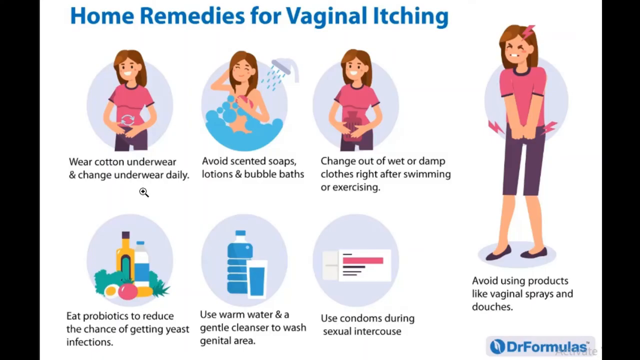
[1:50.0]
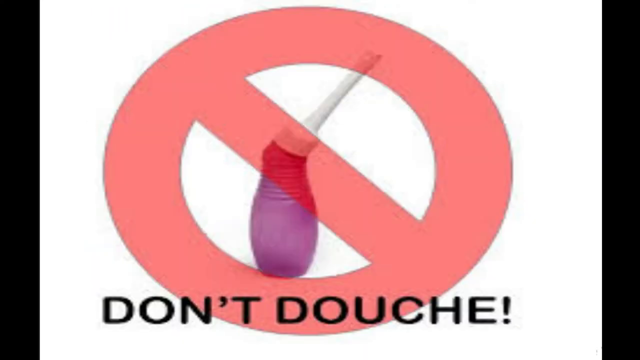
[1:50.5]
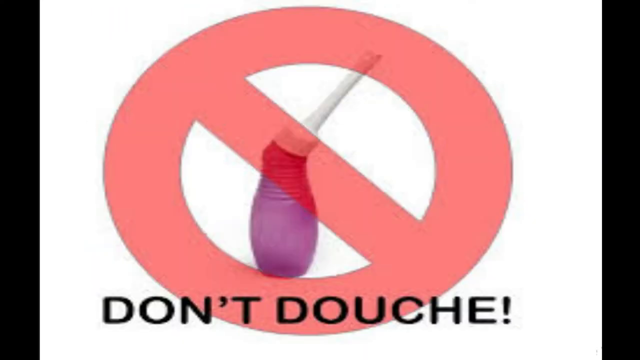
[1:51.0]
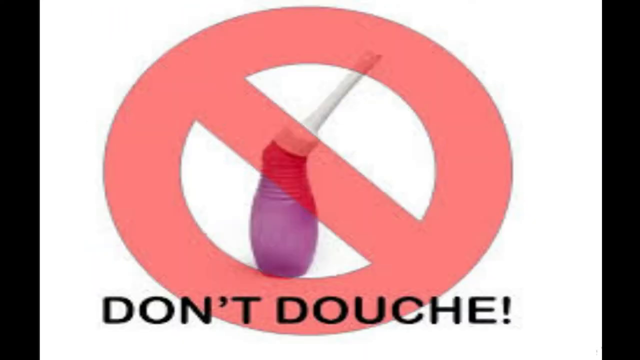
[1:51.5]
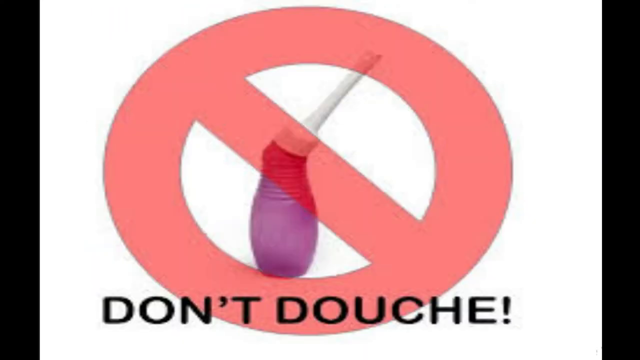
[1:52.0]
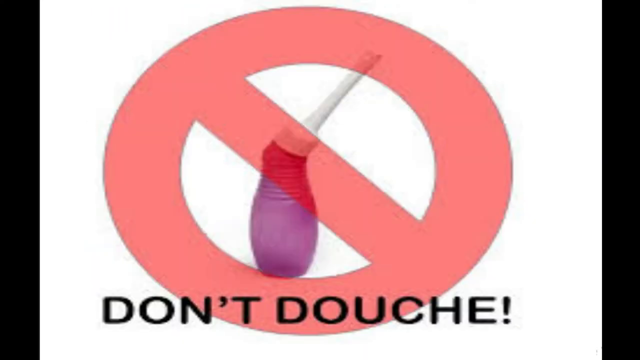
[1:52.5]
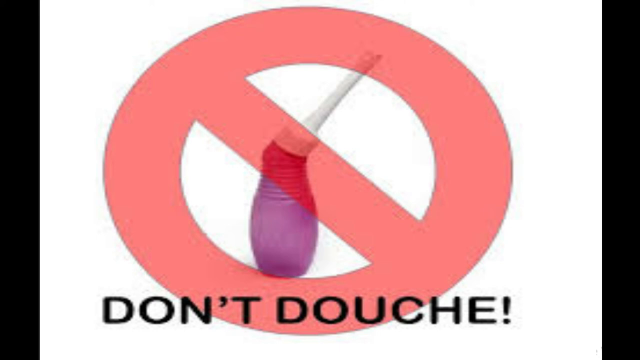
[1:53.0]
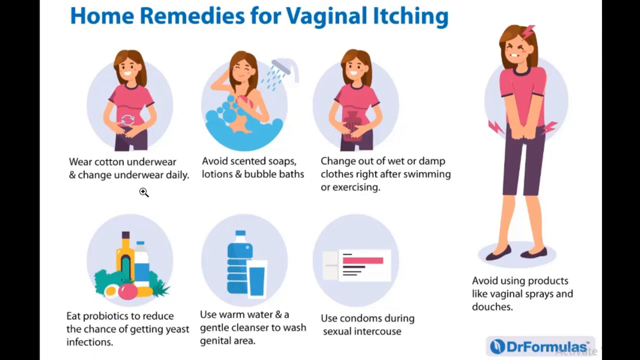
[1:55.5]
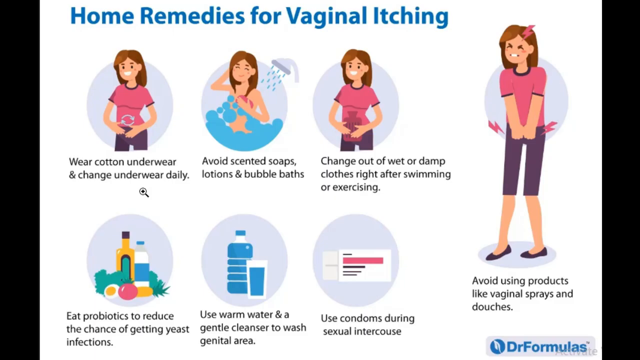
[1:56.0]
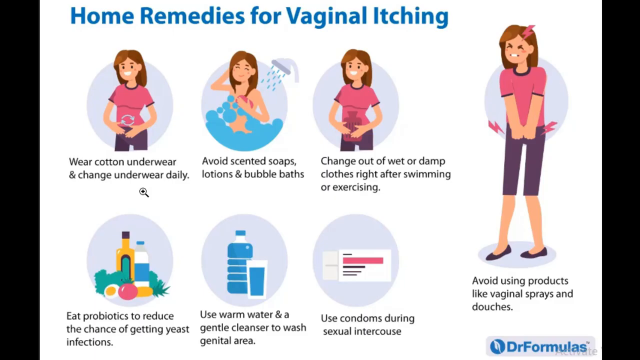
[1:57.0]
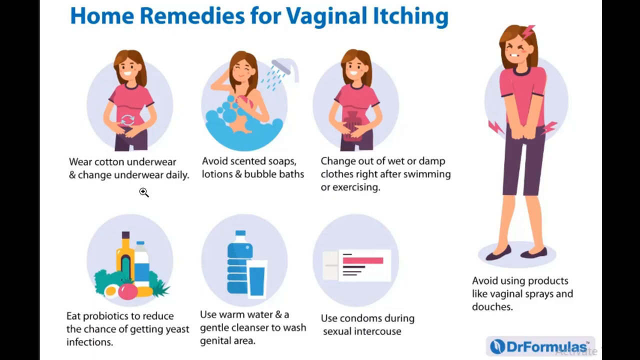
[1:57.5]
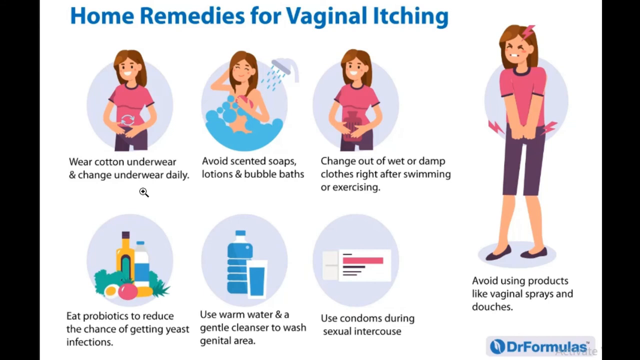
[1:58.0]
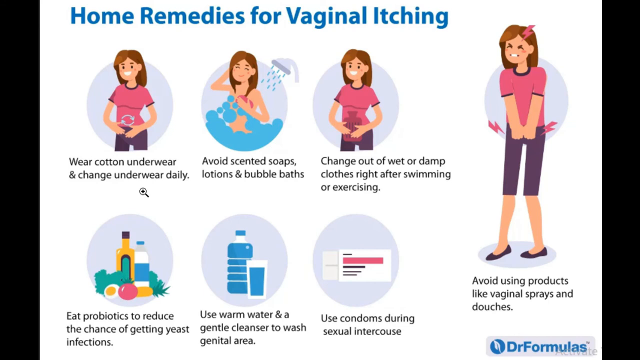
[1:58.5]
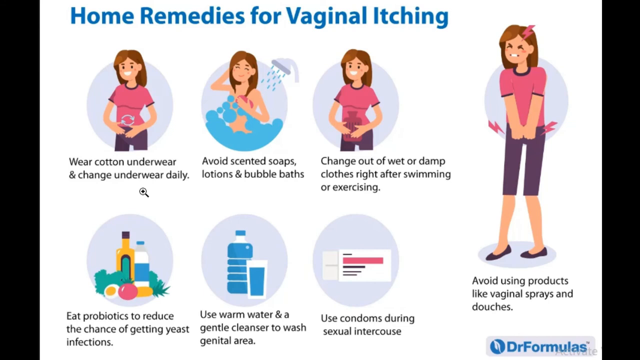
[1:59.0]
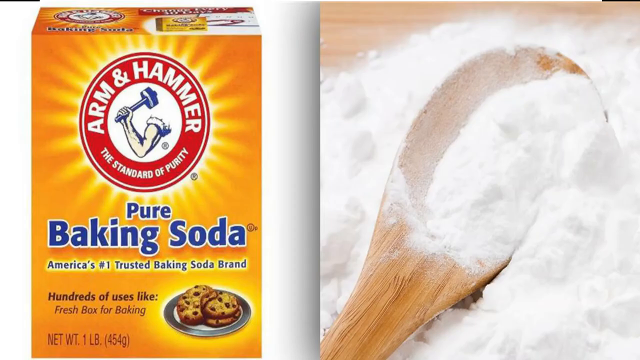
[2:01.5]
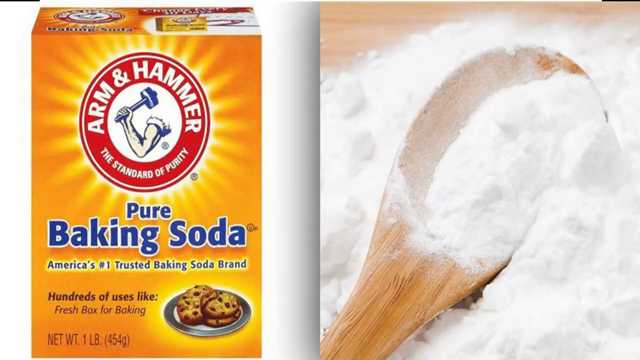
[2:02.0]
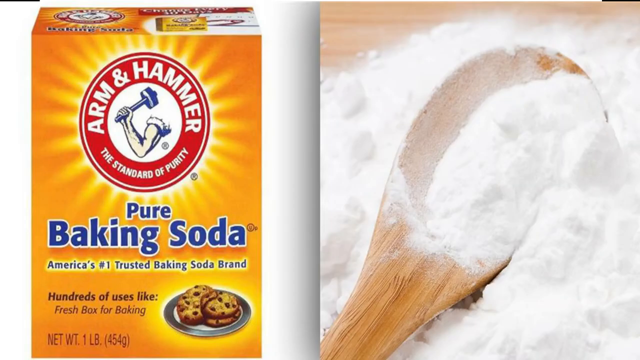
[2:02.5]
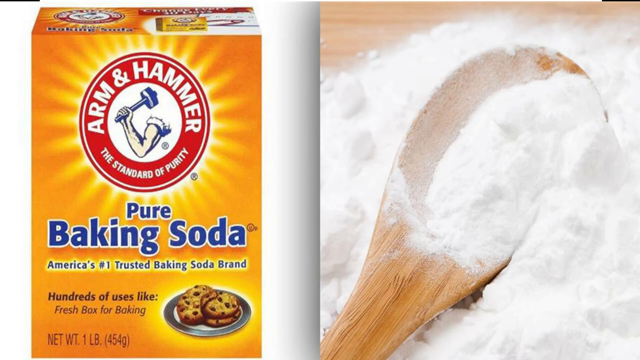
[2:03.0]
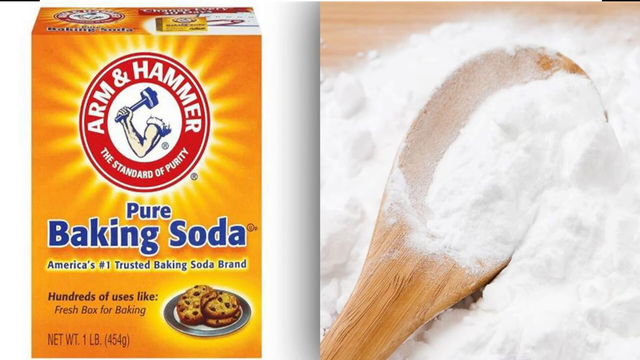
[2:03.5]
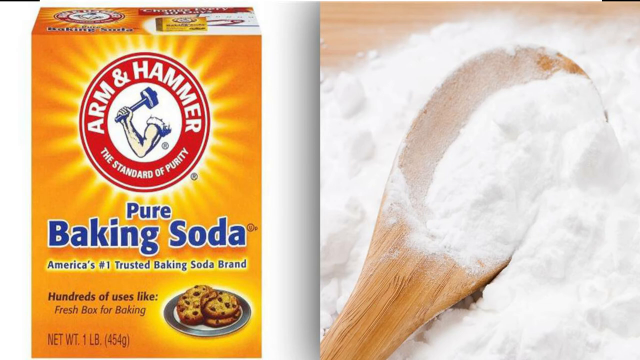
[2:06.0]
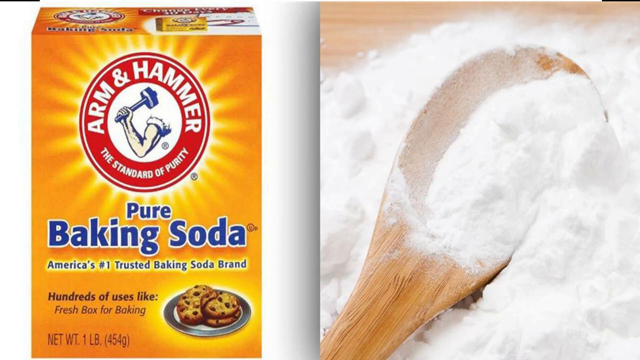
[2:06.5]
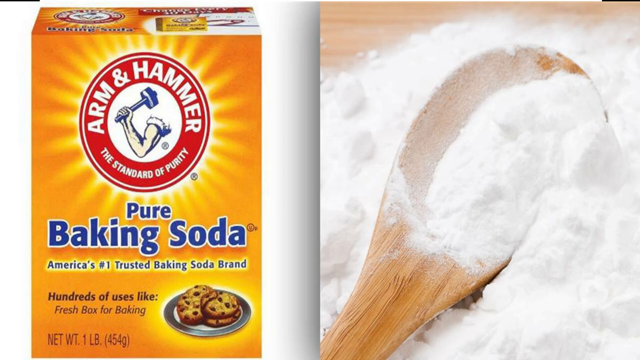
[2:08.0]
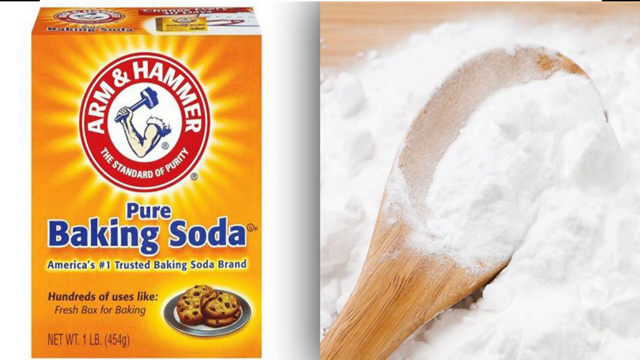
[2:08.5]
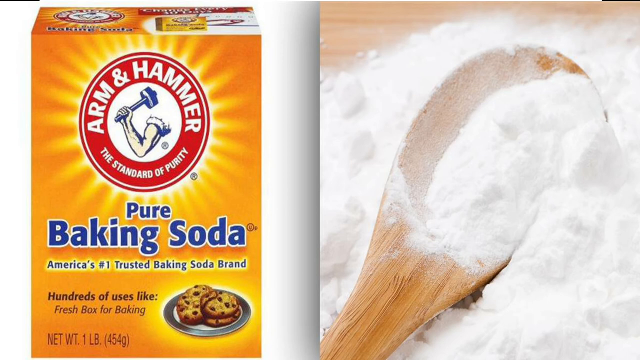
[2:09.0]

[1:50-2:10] A red warning symbol appears, a traditional red outlined circle with a line through the middle, with dark black text underneath that says "don't douche". Against a white background is a picture of a douche with a purple bottom portion and a large white nozzle. The video then goes back to the blue text that reads "home remedies for vaginal itching", with multiple images of a girl who appears to be in pain, shown by pink lightning bolt strikes. She stands with her legs spread a little, wearing purple pants and a pink blouse, holding her arms directly in front of her in kind of a pain posture, with dark hair and anguish on her face.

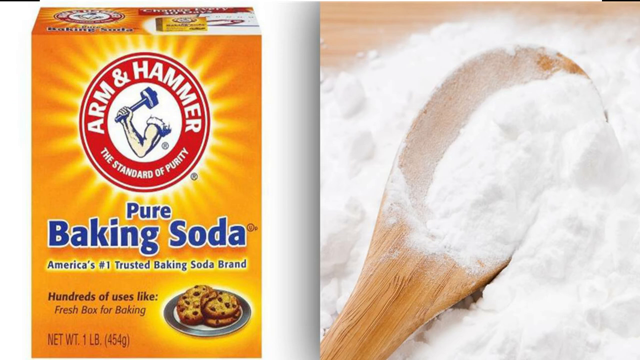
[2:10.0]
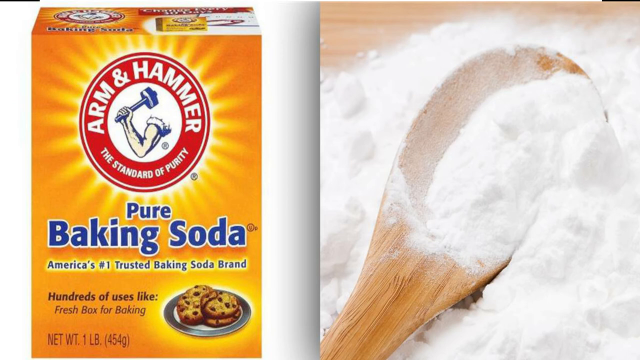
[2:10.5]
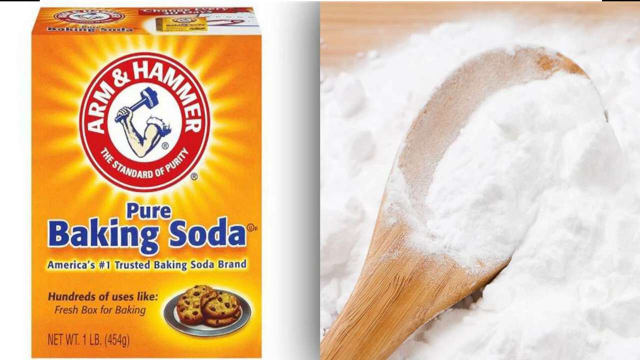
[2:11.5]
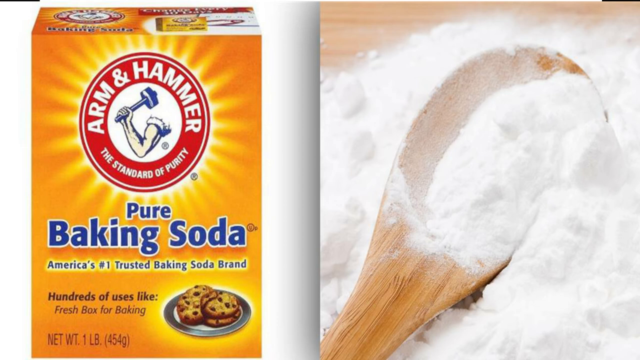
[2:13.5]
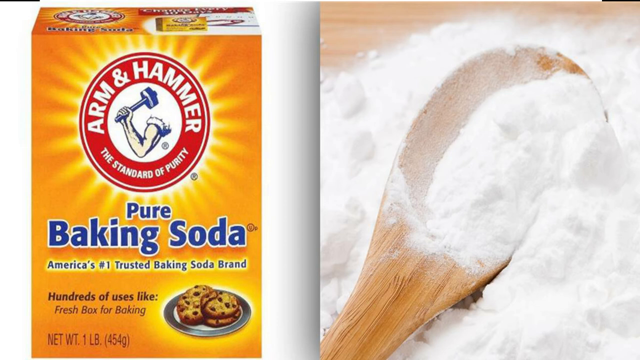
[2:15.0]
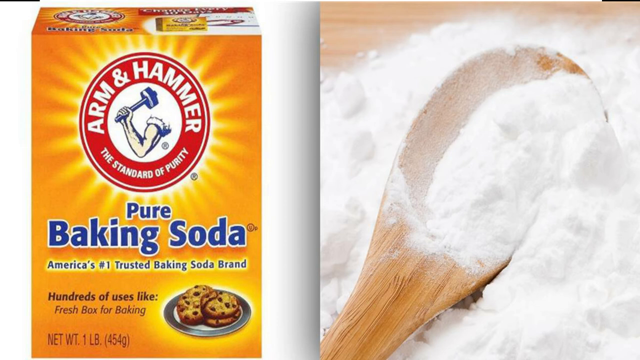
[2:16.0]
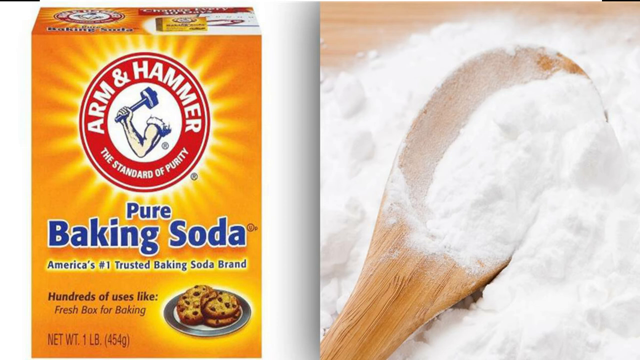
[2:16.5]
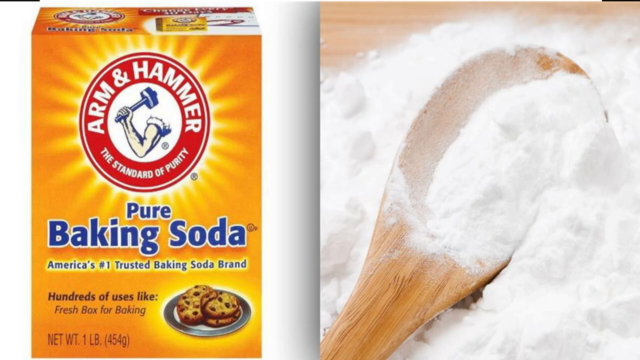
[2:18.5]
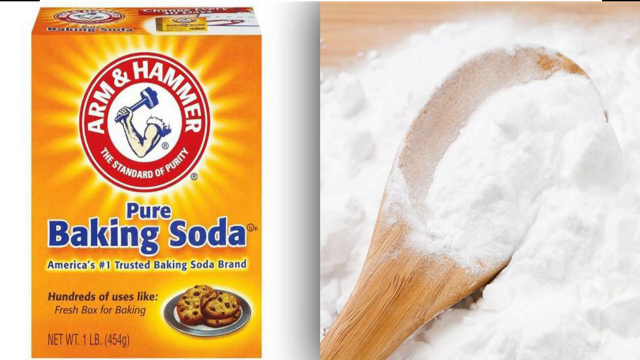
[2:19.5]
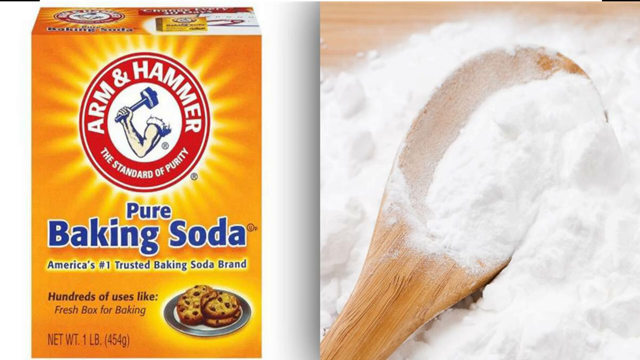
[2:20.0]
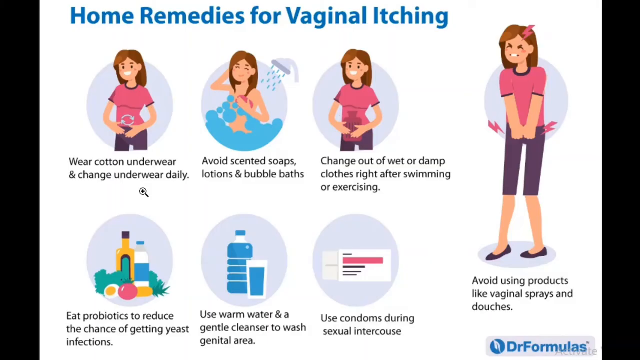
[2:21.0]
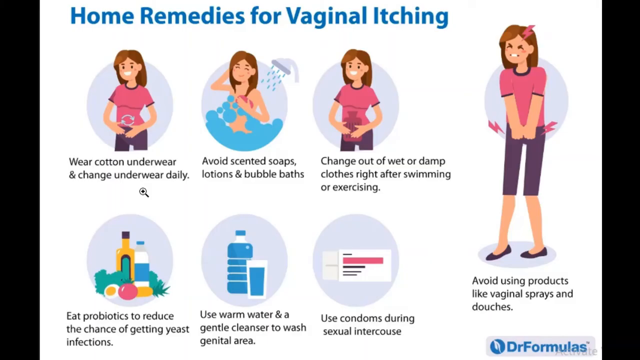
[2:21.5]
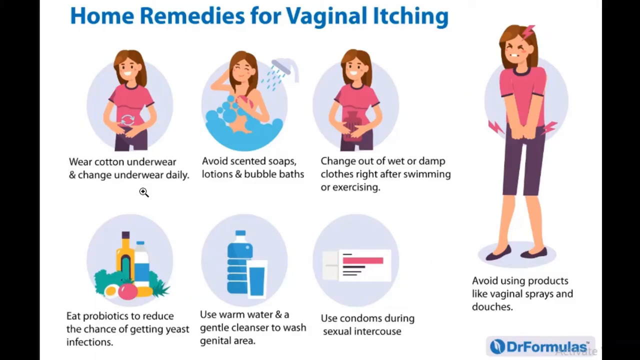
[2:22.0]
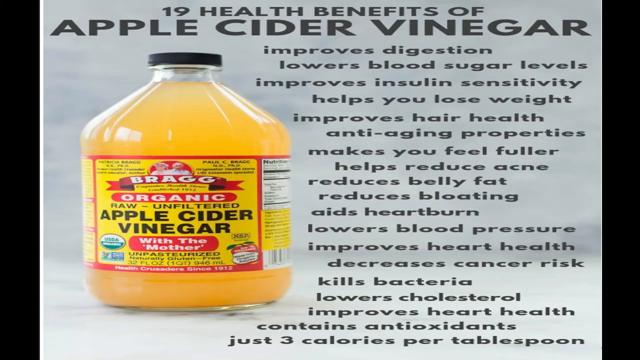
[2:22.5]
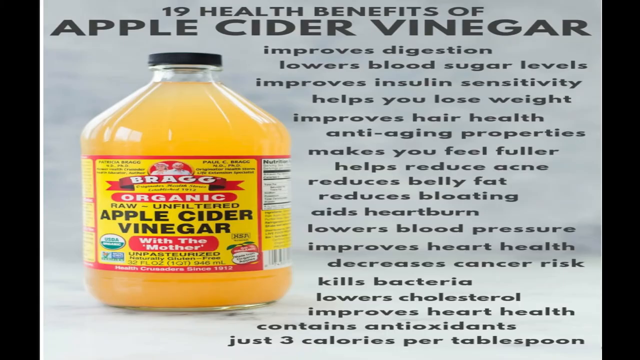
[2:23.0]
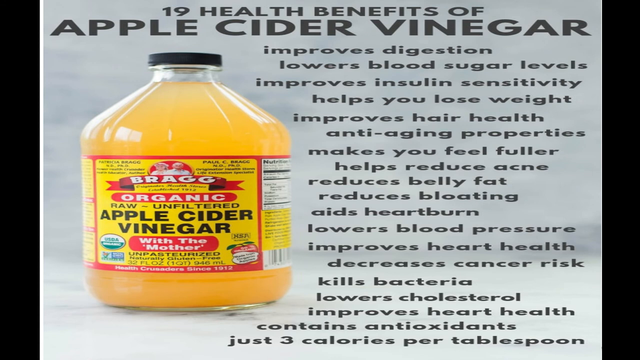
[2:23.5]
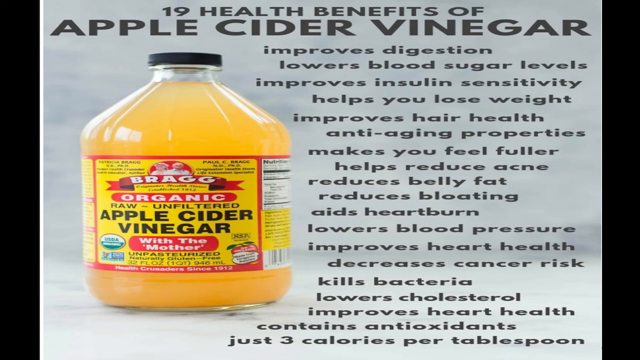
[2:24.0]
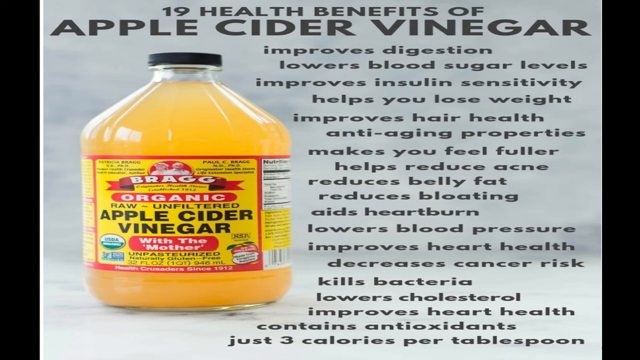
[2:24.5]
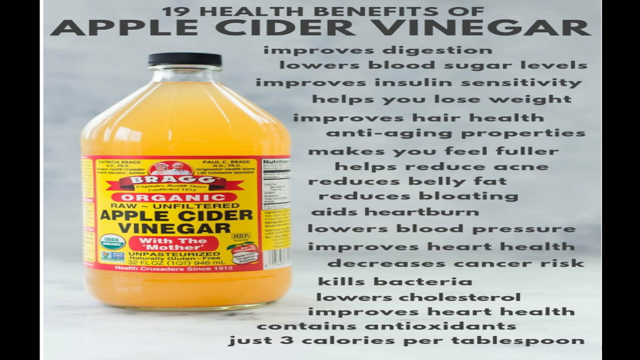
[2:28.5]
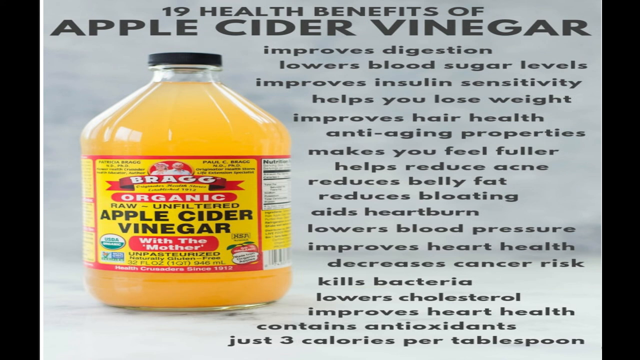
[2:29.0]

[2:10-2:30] Arm & Hammer Pure Baking Soda appears on a split screen. On the right side, a wooden spoon with dark grains running through it is dipped in baking soda, with white baking soda all over the spoon and the board, forming a pile. On the left is the bright yellow baking soda box with the red circular Arm & Hammer logo showing an arm in a flexed position holding a hammer. Below, it says "Pure Baking Soda" and "America's number one trusted baking soda", and below that are freshly baked cookies on a silver plate. The video then returns to the original screen with the girl who is in pain or a little anguish.